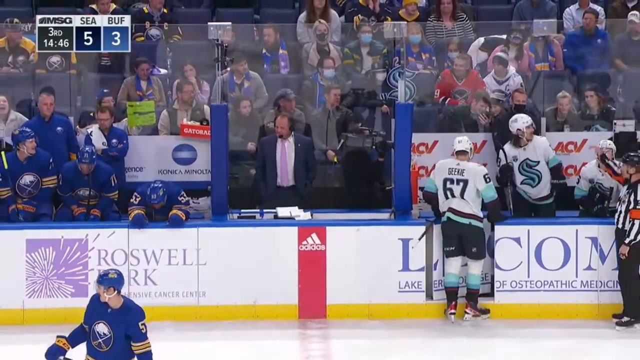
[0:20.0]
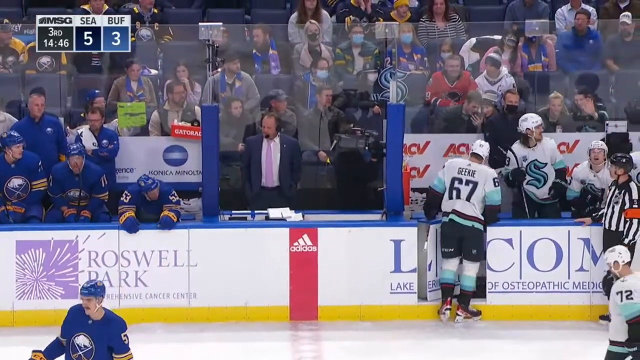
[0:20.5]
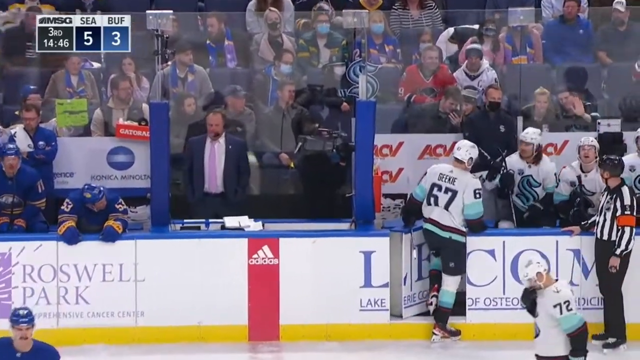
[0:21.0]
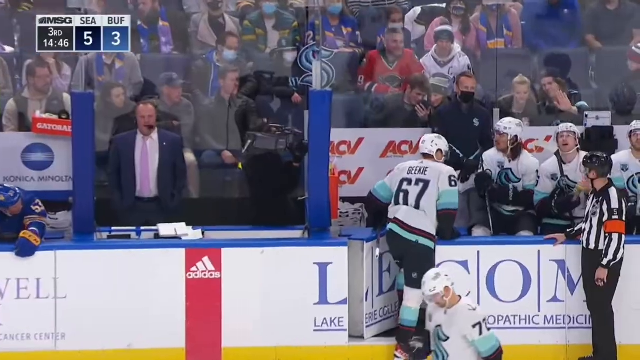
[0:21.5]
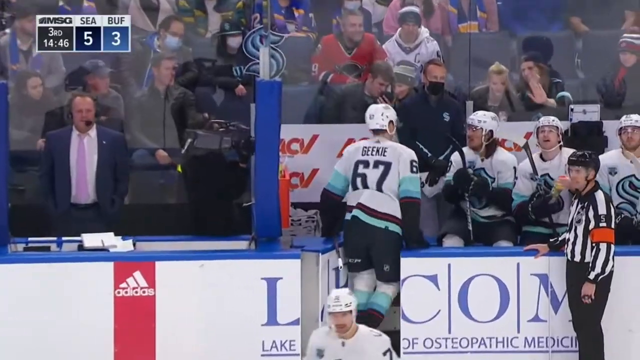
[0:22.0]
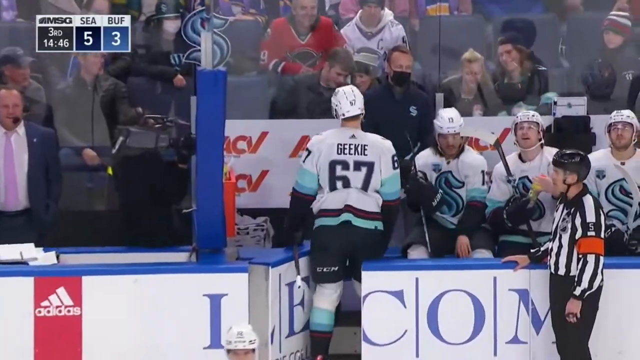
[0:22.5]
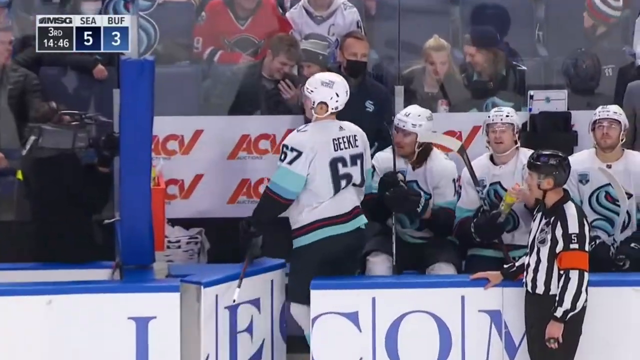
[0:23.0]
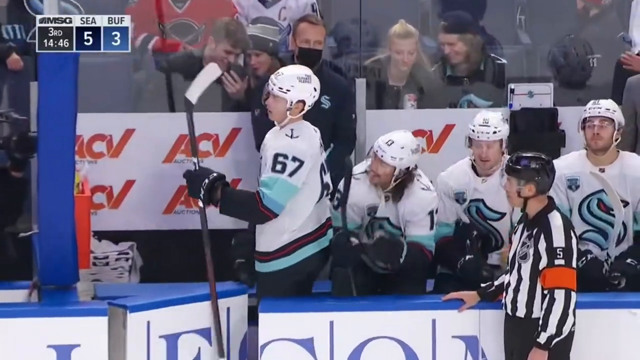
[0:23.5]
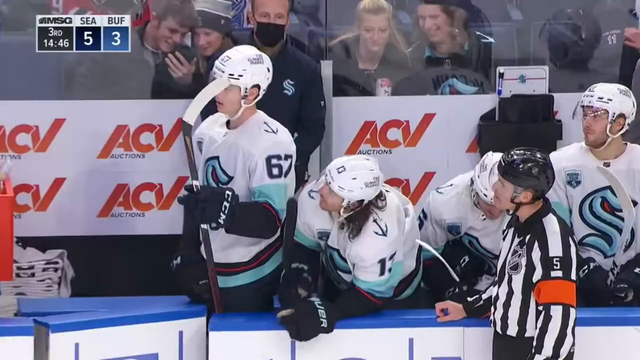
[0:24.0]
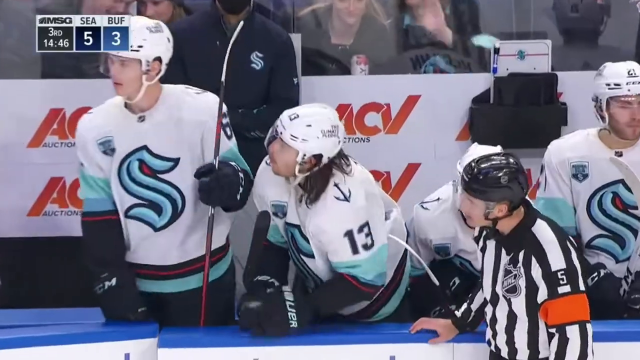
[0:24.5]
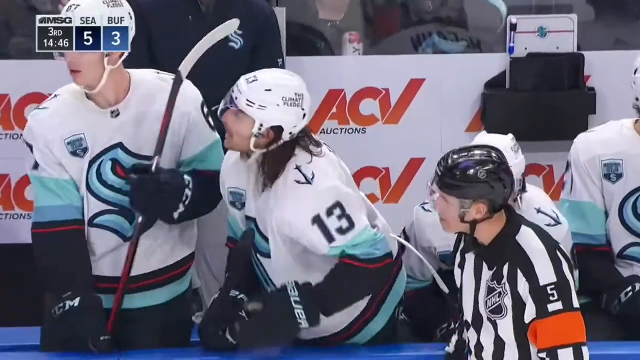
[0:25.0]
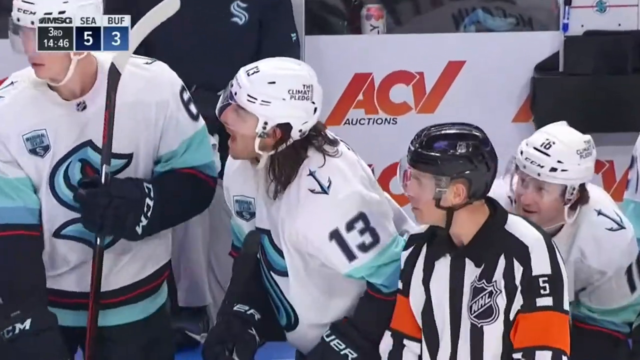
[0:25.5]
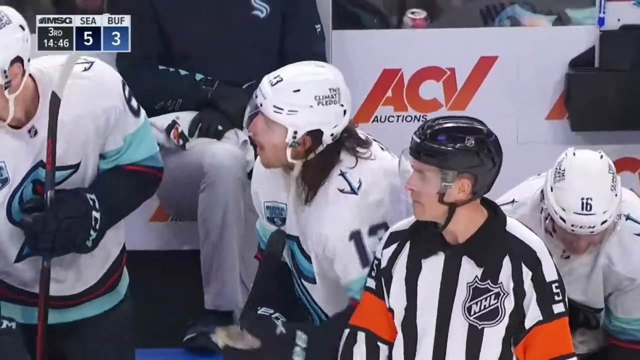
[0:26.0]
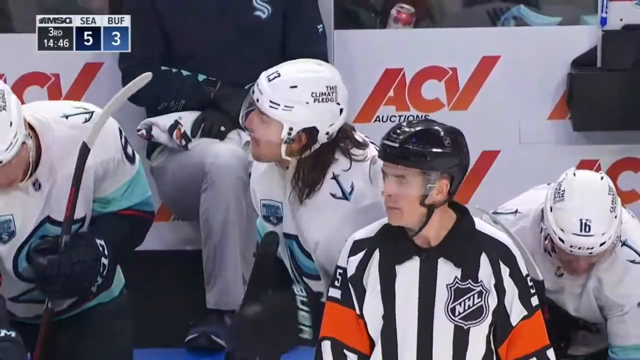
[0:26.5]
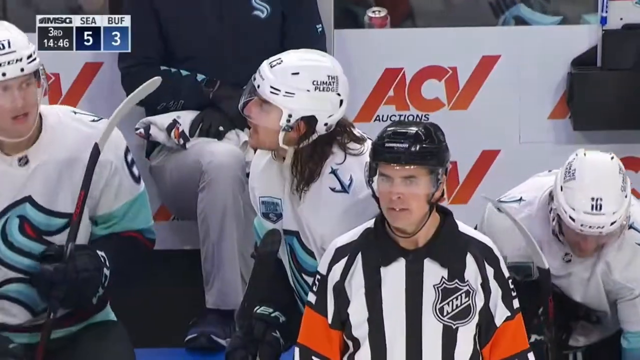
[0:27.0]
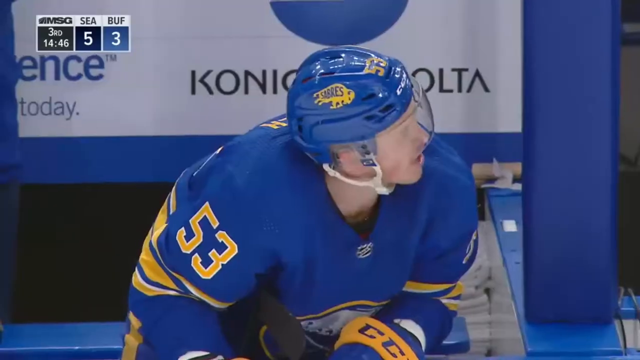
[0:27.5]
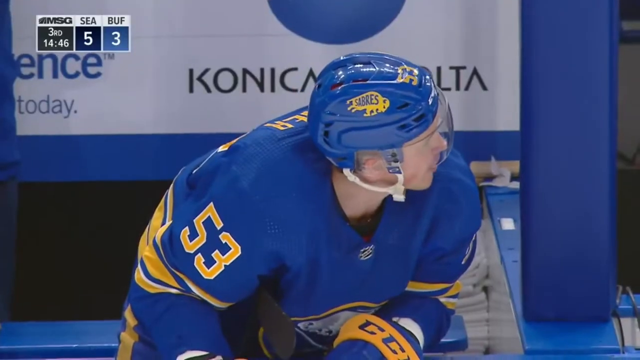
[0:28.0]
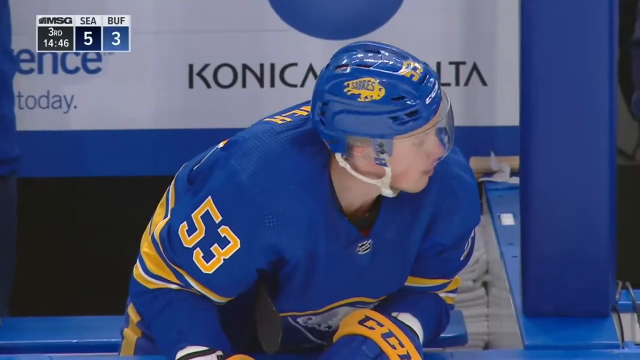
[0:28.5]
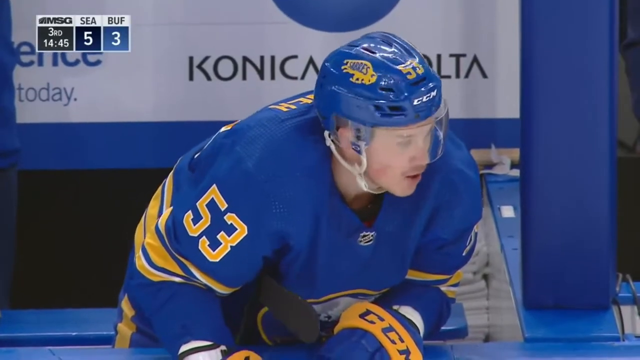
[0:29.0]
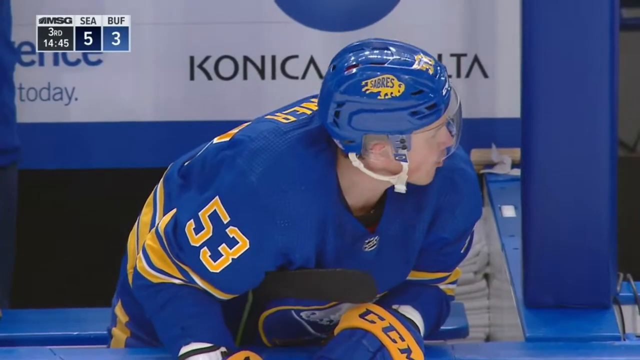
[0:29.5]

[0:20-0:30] The hockey game between Seattle and Buffalo continues. The scoreboard shows Seattle at 5 and Buffalo at 3; it looks like the third quarter, with 14:46 left in the game. A couple of players are arguing and have been sent to the penalty box, two of them from Seattle. One player, Tanev, is arguing outside, possibly with the coach or an opponent. There is some fighting going on. The arena is very crowded. "MSG" appears on screen, so the venue is possibly Madison Square Garden, and the game is possibly some sort of championship or final.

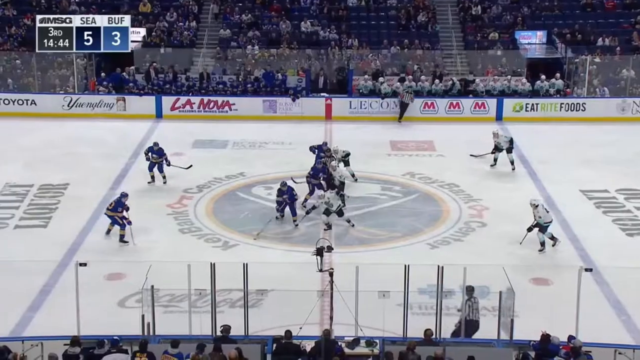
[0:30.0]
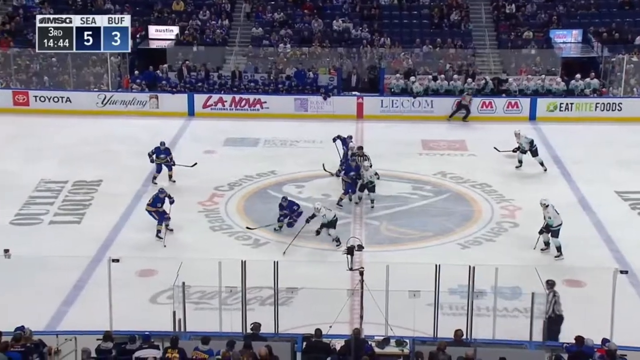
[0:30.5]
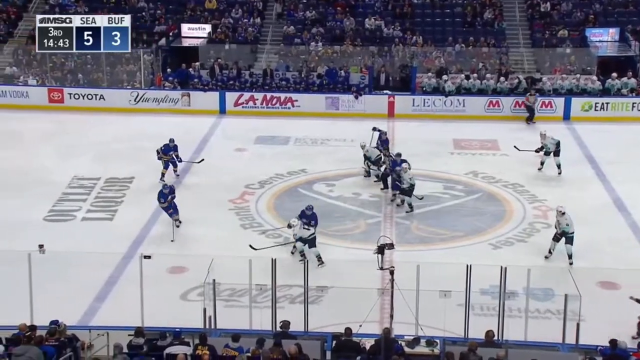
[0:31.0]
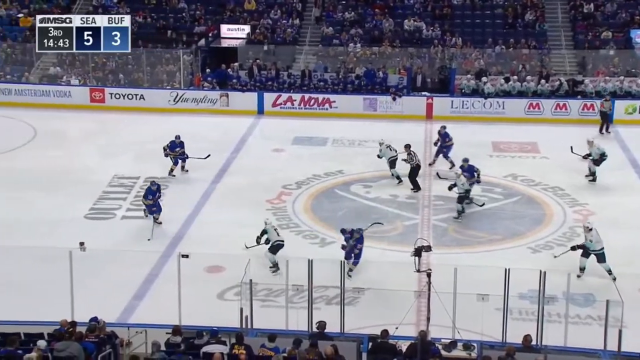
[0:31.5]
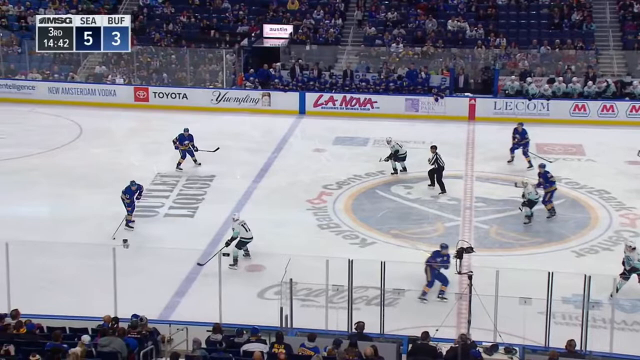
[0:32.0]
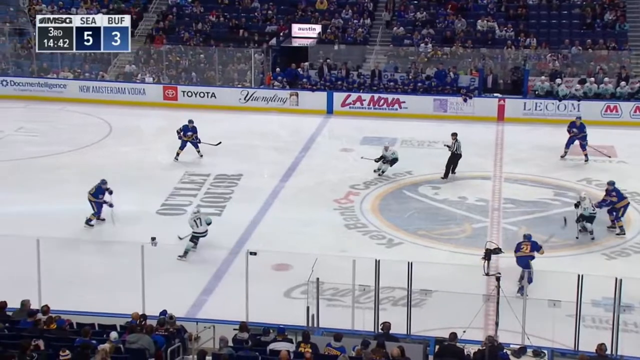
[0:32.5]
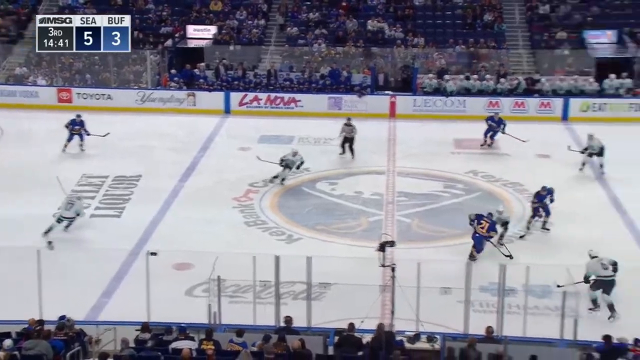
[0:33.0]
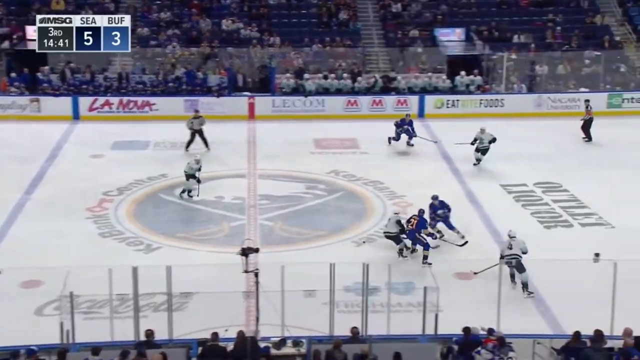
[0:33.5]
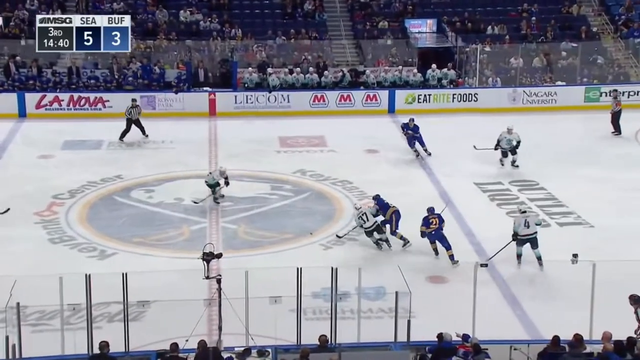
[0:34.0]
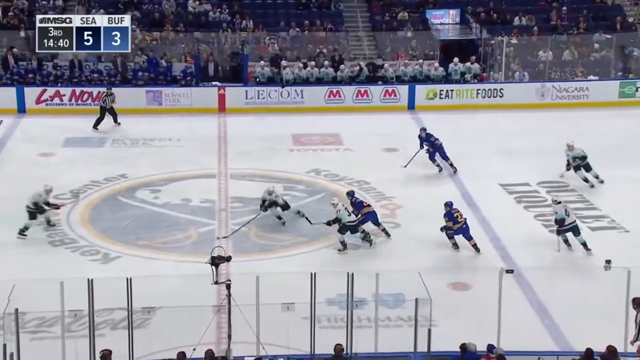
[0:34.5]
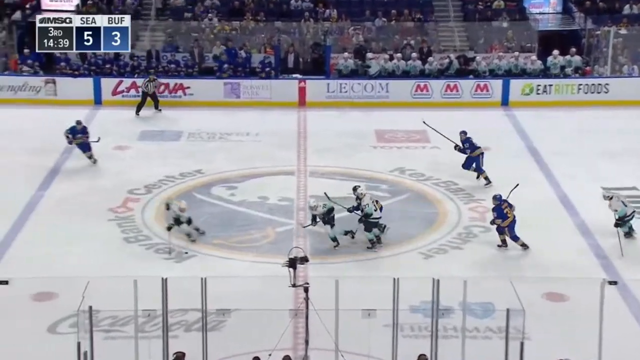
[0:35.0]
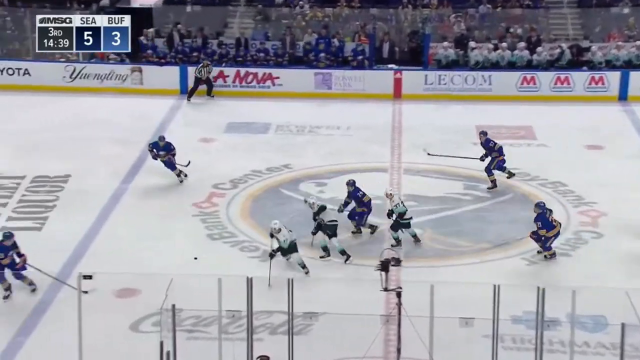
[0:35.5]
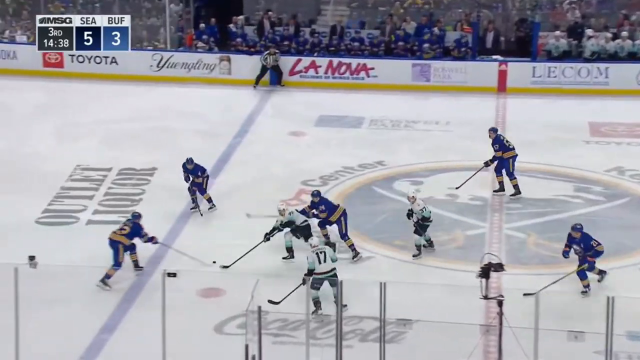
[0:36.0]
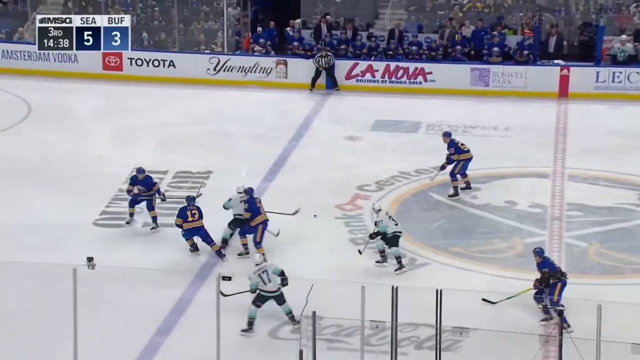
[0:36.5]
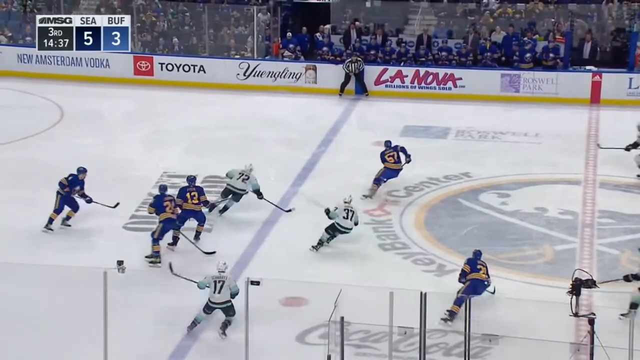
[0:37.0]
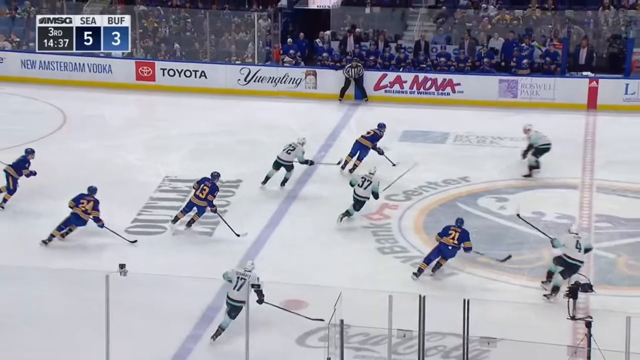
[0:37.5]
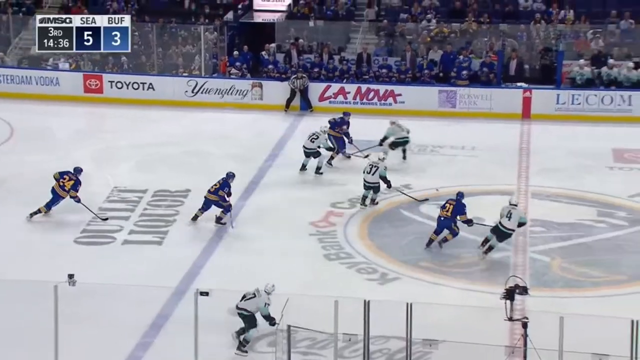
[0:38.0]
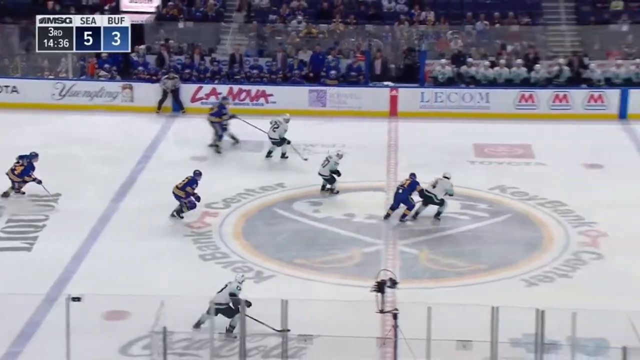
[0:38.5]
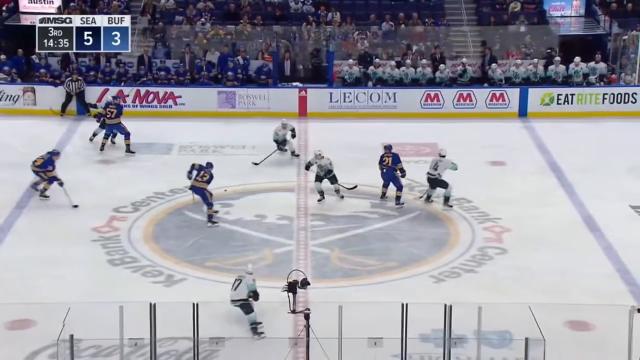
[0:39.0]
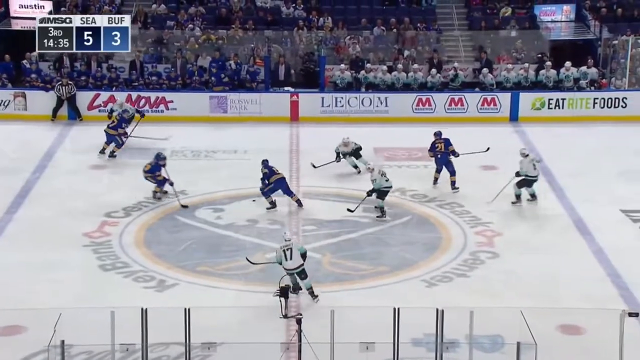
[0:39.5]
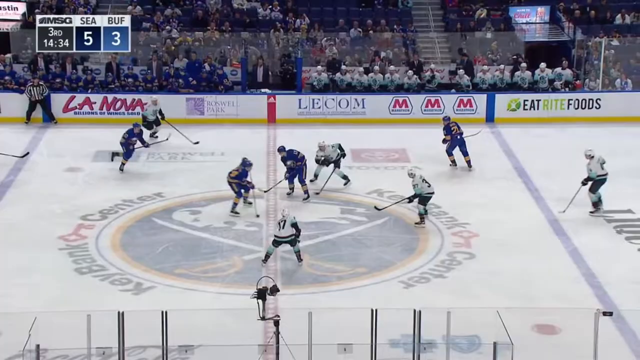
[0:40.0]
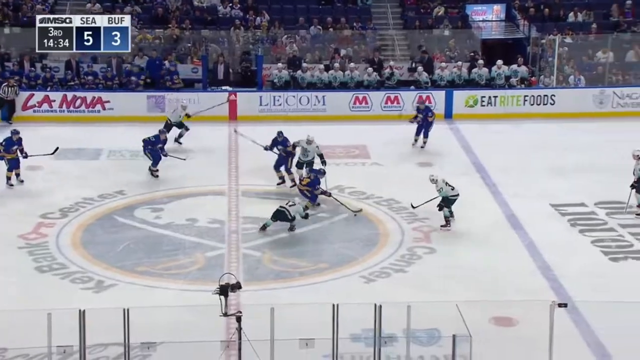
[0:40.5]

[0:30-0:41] The game between Seattle and Buffalo continues with a play in action; everything is aggressive as the two teams go at each other. The arena is not very crowded. The score is 5-3 Seattle, it looks like the third quarter, and there is 14:44 left. The players battle to put the puck into the goal, and the video shows a full view of the court with the two teams going against each other.